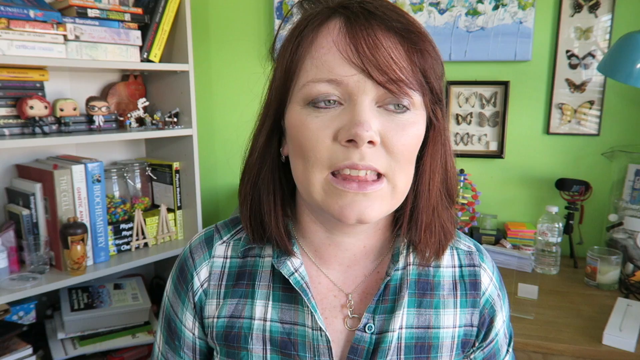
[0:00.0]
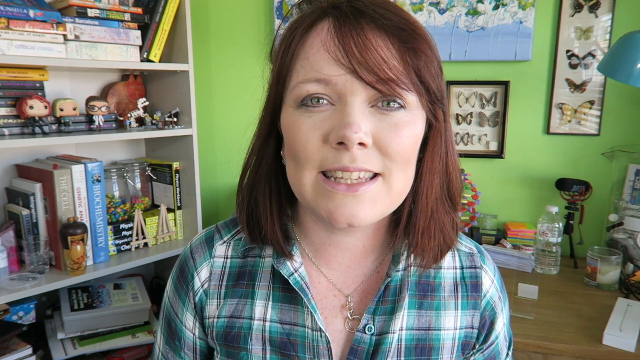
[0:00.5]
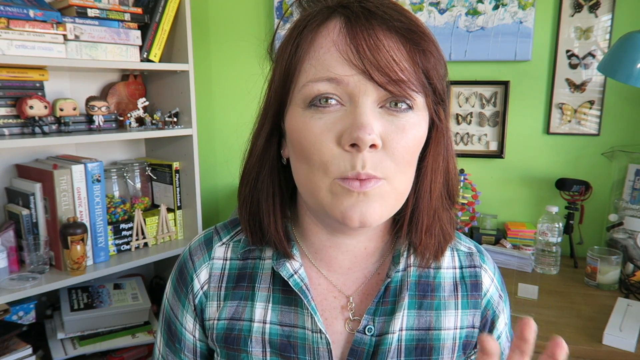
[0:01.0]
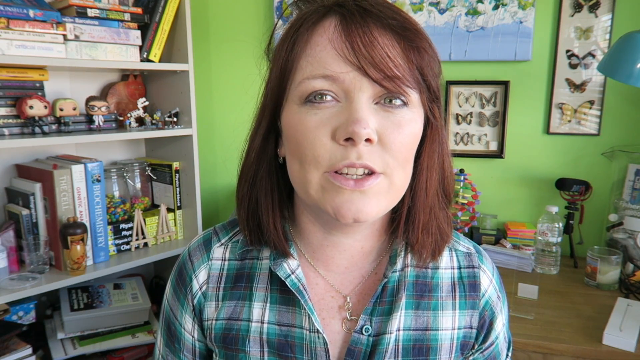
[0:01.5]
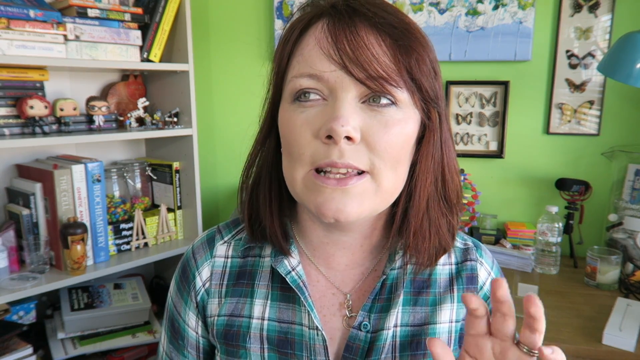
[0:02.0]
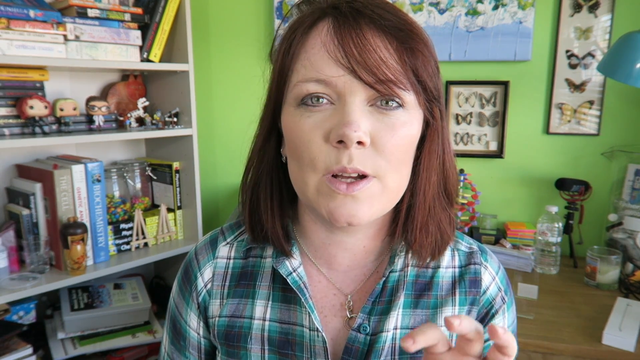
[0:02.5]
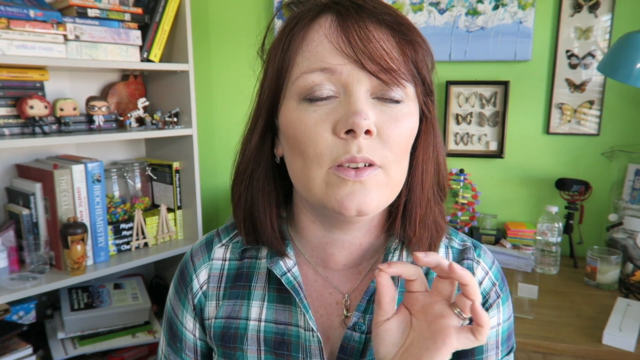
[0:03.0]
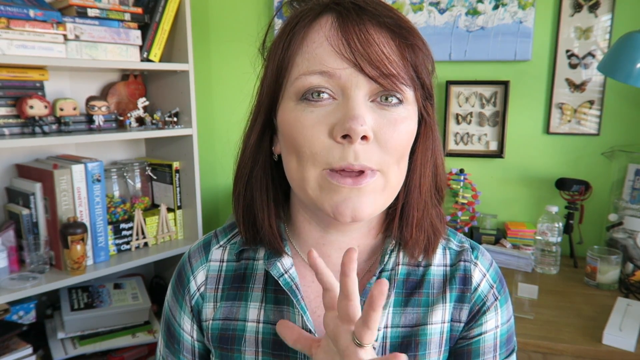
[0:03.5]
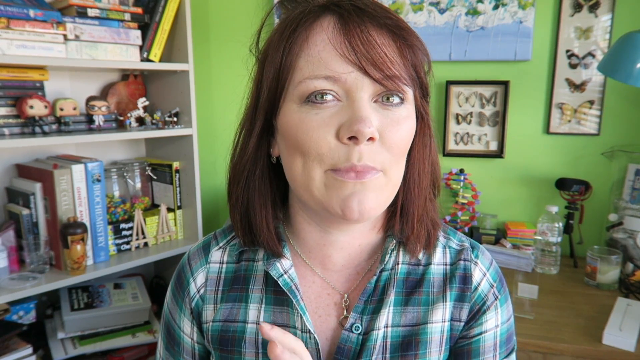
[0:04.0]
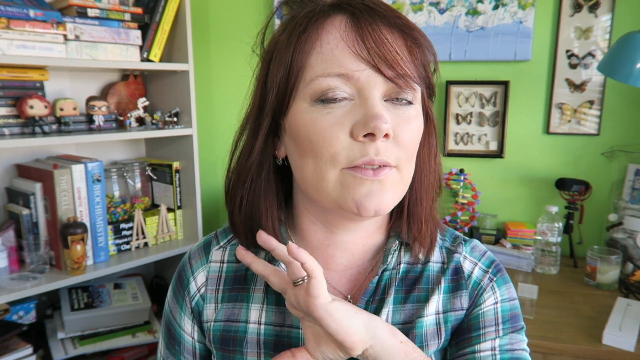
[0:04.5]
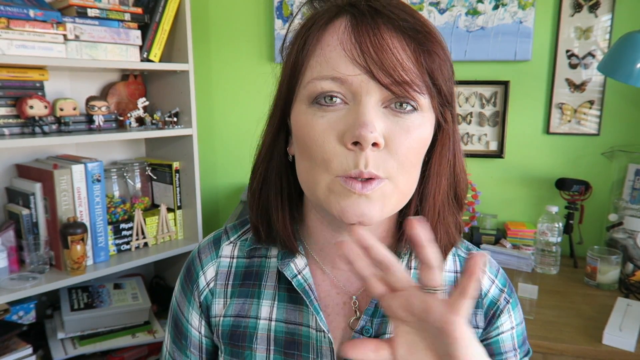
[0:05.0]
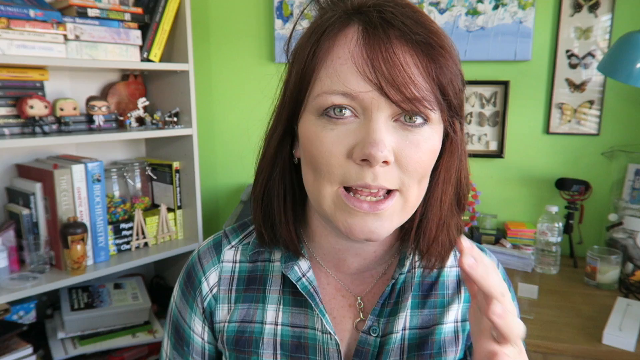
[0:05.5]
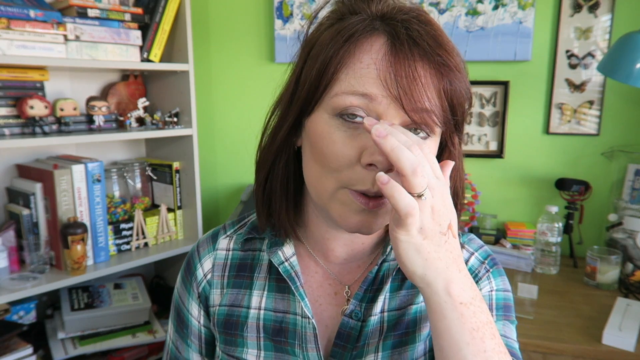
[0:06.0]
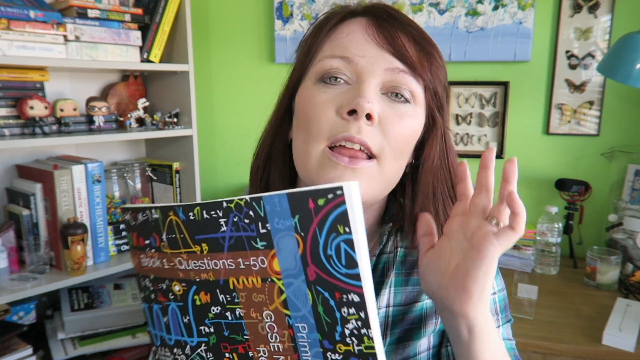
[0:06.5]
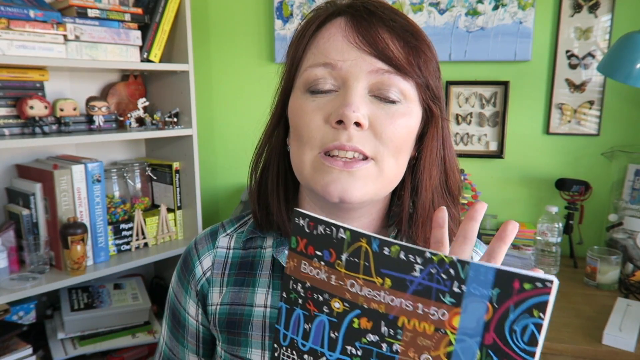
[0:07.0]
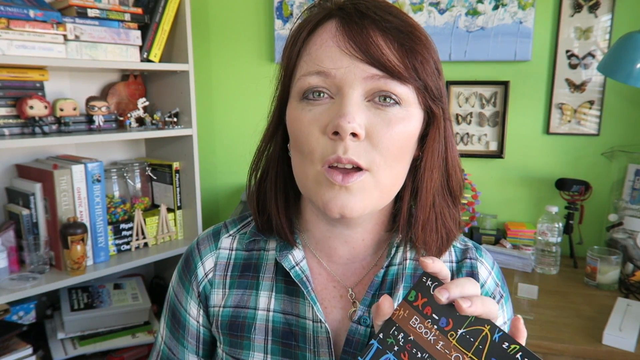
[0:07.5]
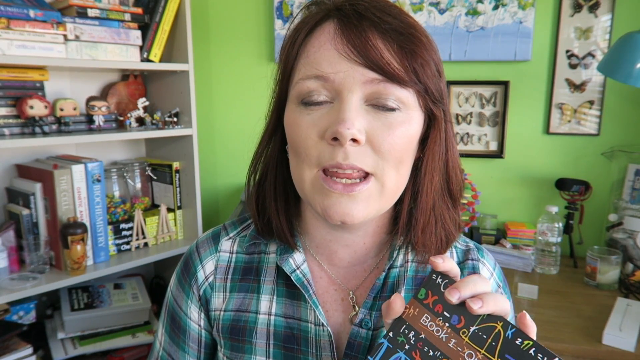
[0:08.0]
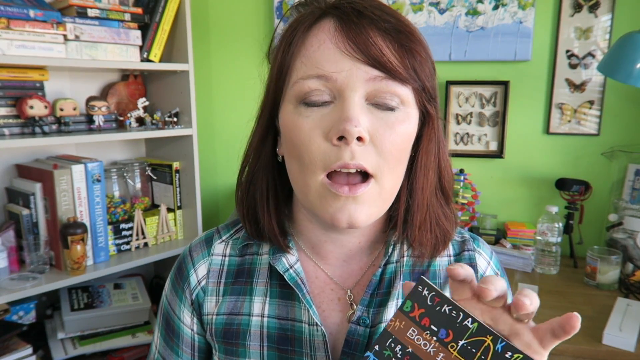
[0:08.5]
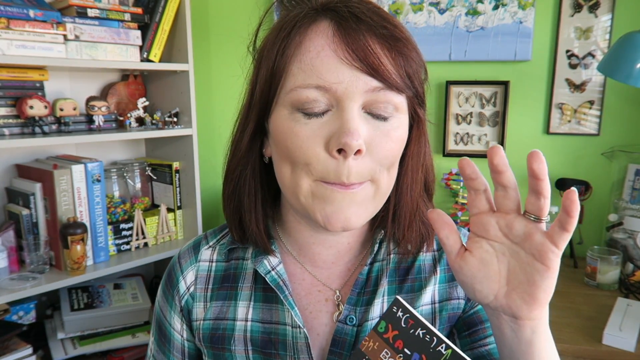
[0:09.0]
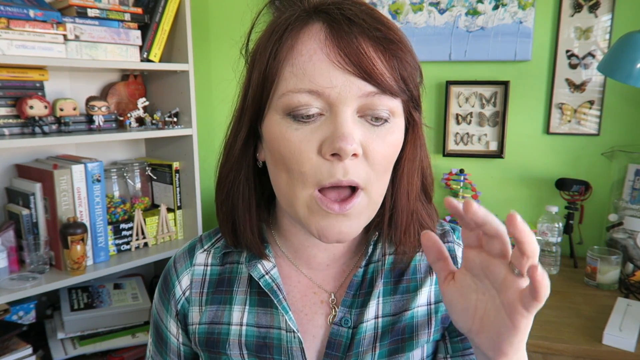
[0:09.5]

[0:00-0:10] A white woman with long hair appears, wearing a blue scotch shirt with white stripes and a necklace. There is a book in her hand, and she seems to be talking about the book. The background has a lot of books, including a shelf of books, and toys are also visible there, apparently used as decoration. The wall is painted a lime color and has a butterfly decoration on it. There is a blue lamp, and there is a box behind her, possibly of water, though it is unclear what it is.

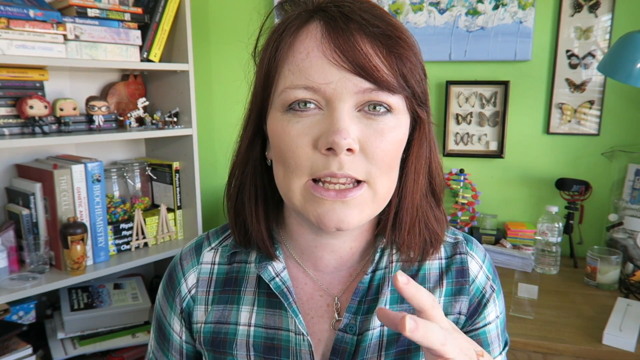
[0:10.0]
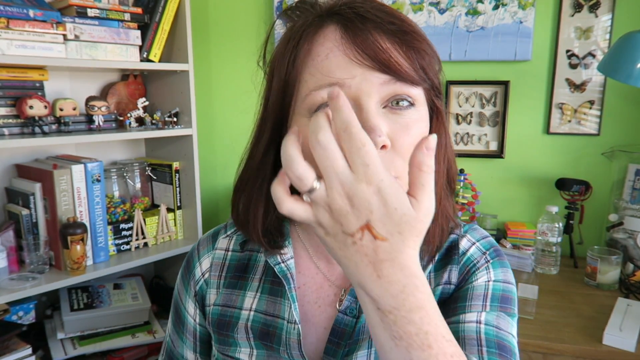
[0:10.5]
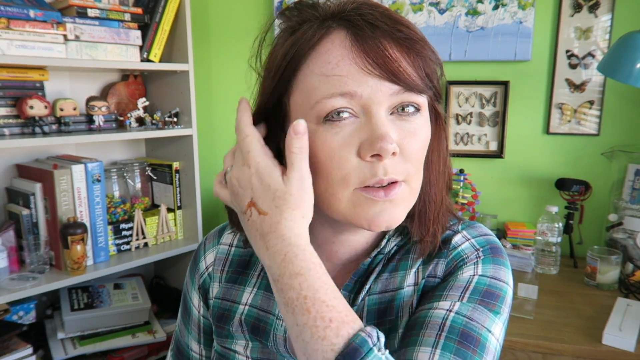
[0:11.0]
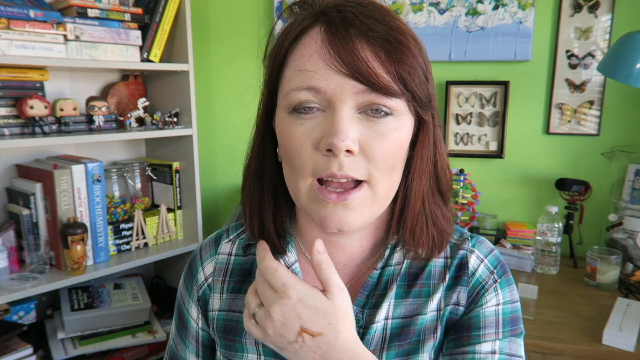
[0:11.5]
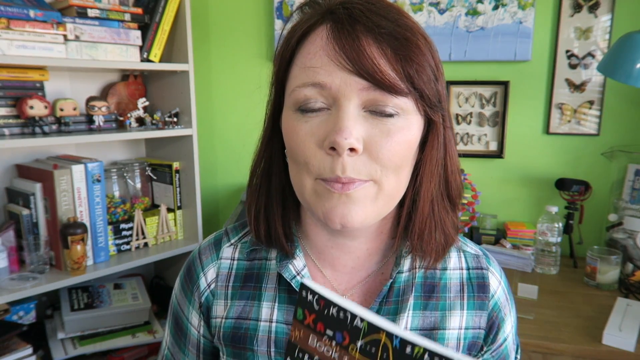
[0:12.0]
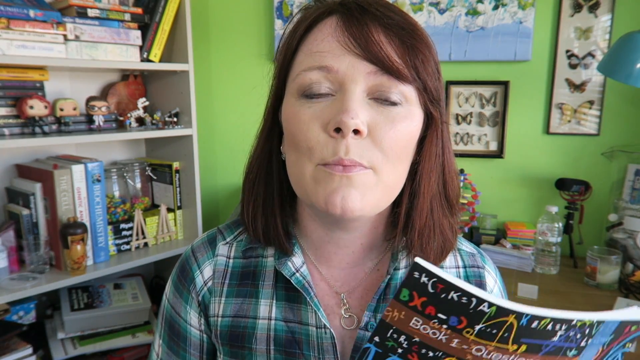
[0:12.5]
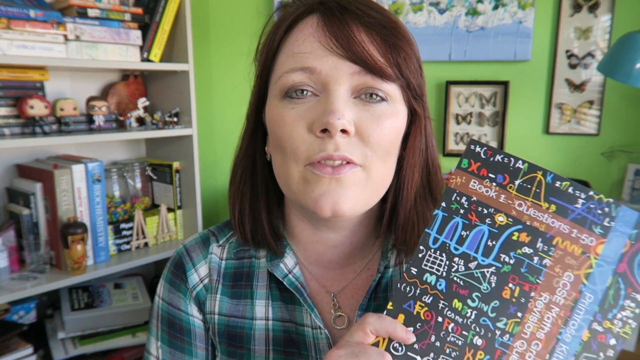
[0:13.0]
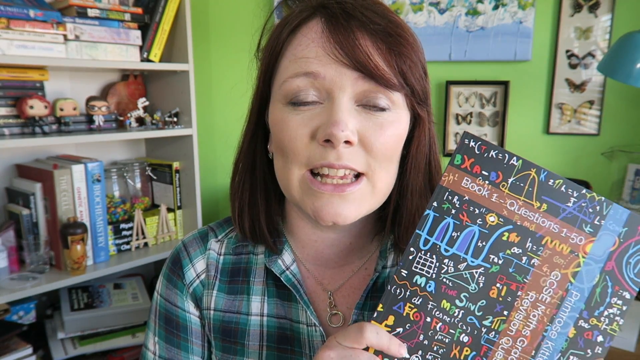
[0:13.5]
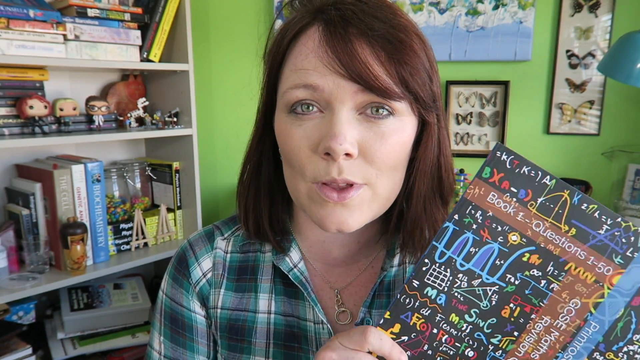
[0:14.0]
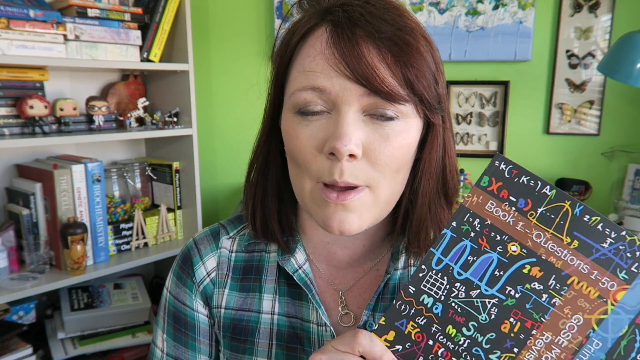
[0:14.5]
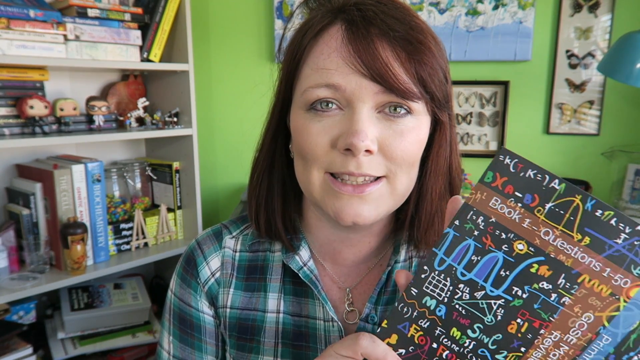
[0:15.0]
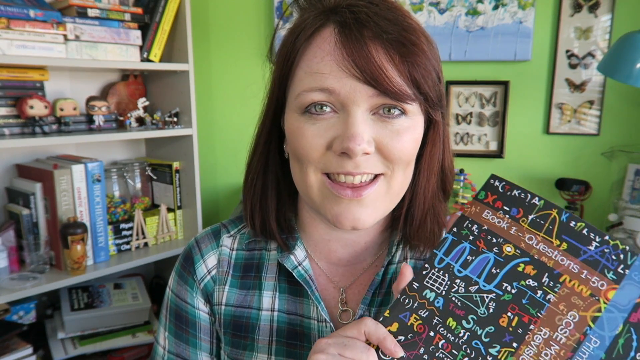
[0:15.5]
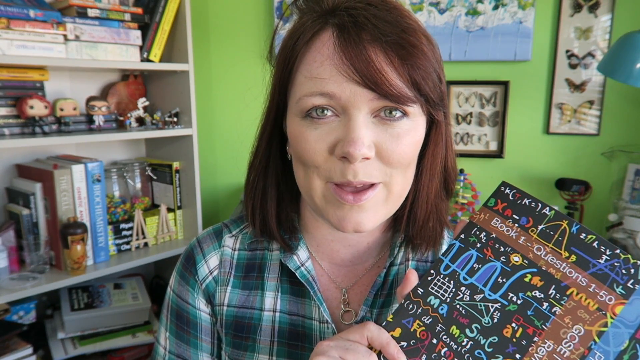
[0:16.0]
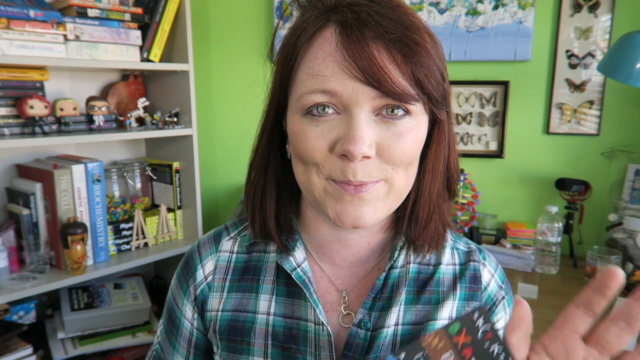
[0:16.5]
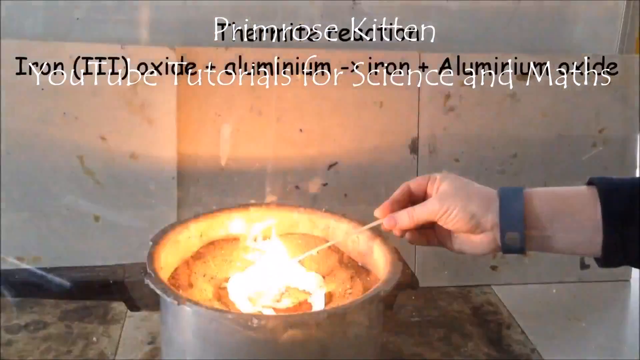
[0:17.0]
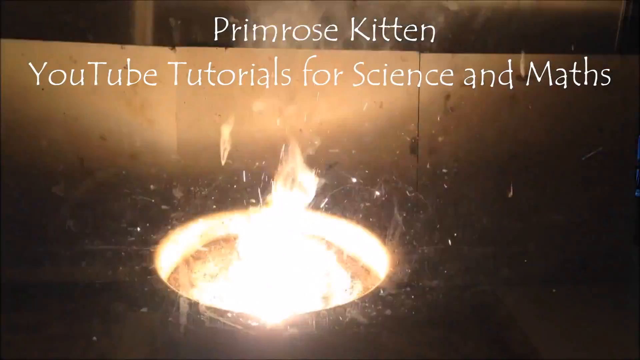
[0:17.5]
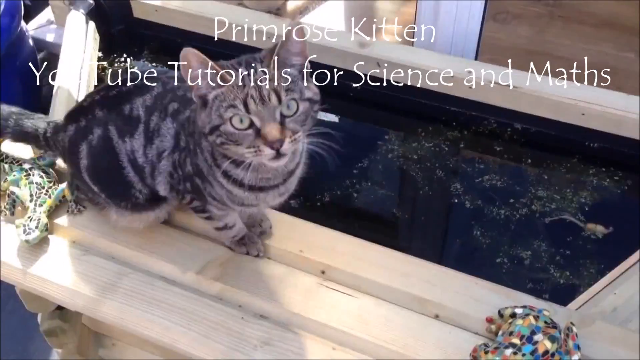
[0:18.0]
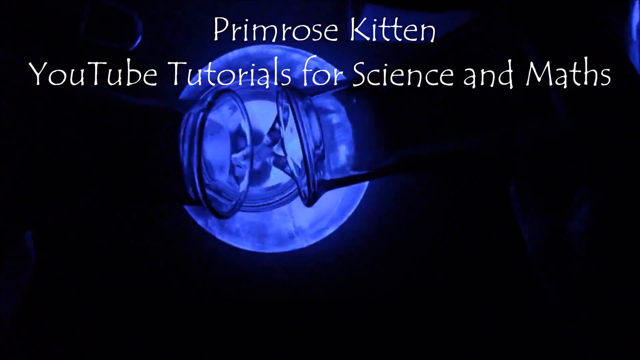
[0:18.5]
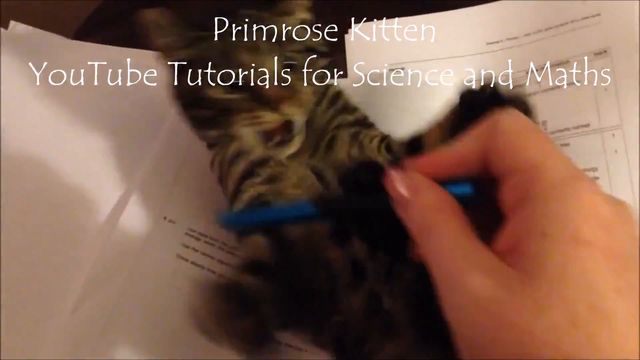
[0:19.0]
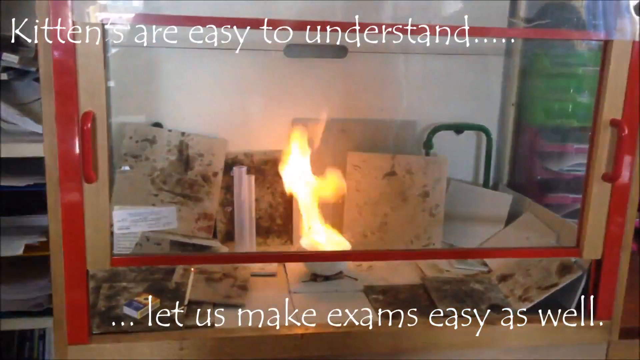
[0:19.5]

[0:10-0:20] The same white woman with long hair, wearing a blue scotch shirt with white and a necklace, raises her hand to fix her hair, revealing a tattoo on her hand. The background looks like a study room, with a lot of books on a shelf and cartoon decorations. The wall is painted a lime color and has butterfly decorations, and there is a powder blue lamp. The video then moves quickly, showing a cat and a fire, along with written words including "Primrose Kitchen".